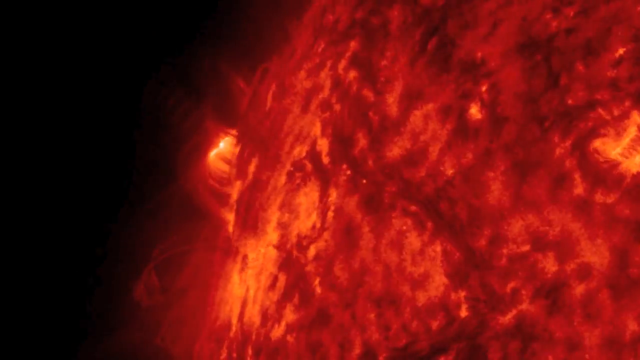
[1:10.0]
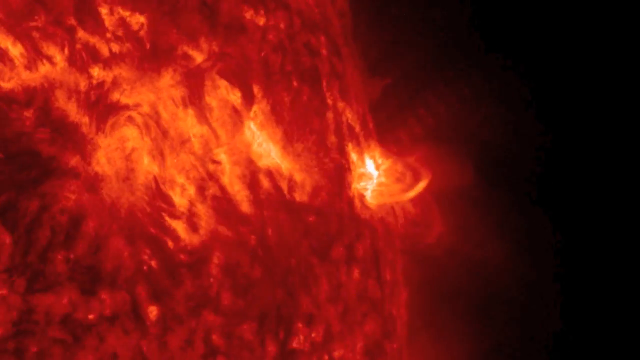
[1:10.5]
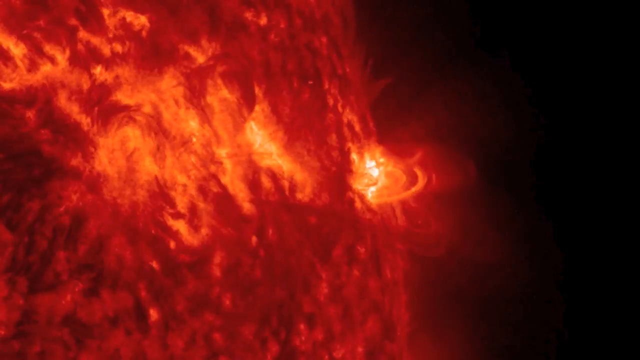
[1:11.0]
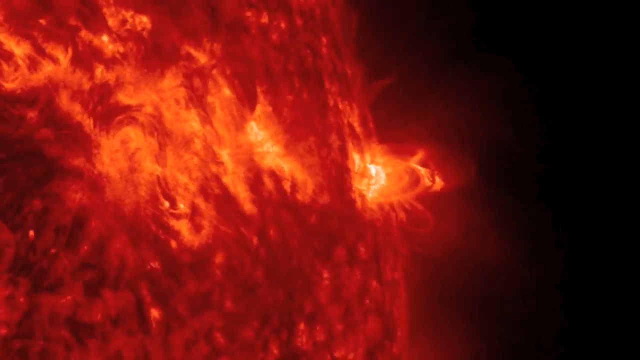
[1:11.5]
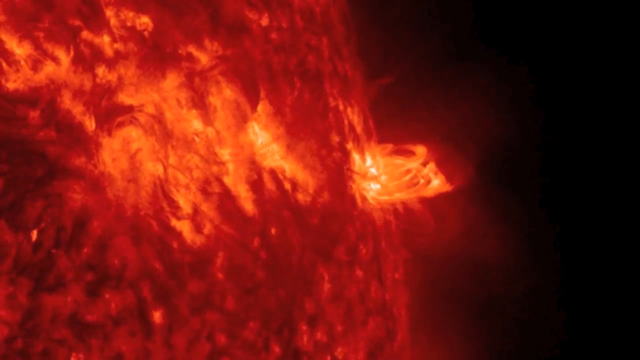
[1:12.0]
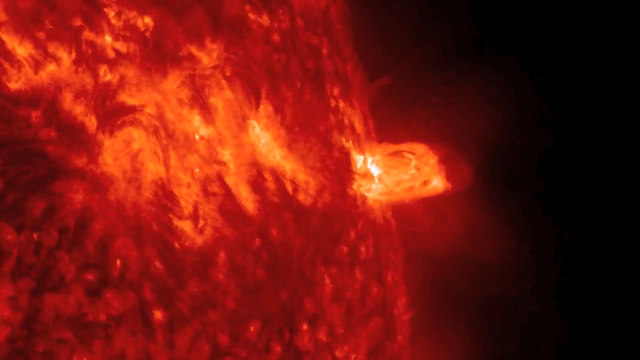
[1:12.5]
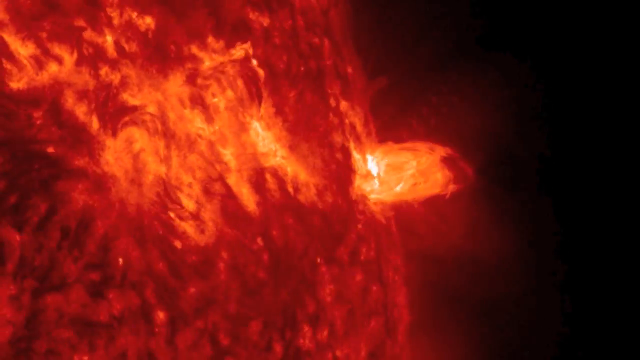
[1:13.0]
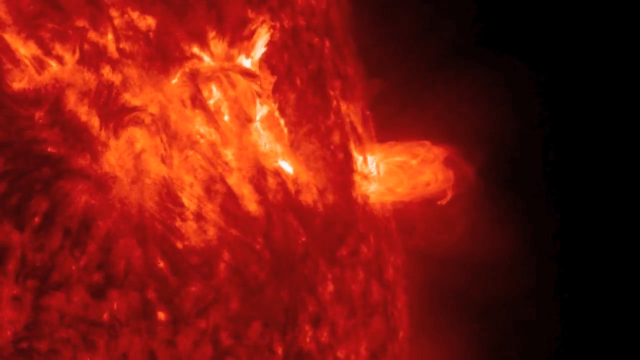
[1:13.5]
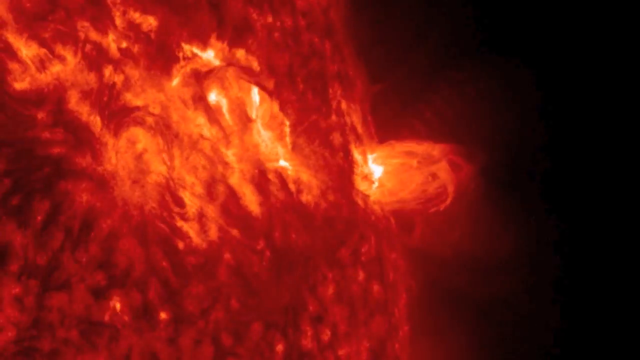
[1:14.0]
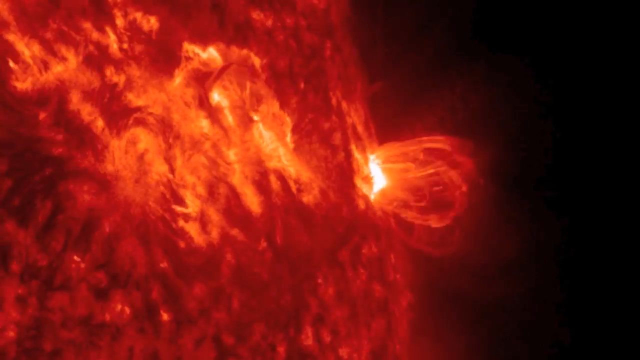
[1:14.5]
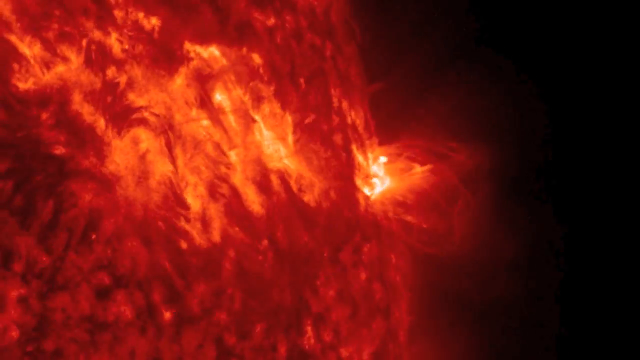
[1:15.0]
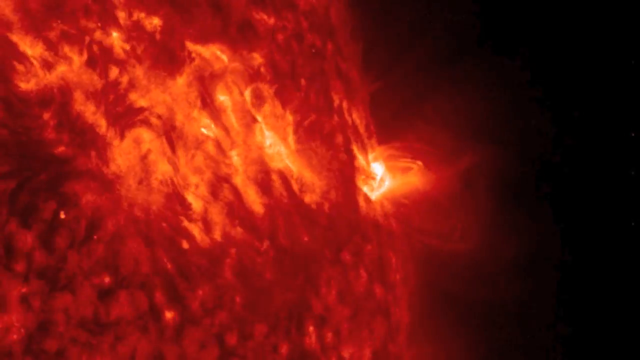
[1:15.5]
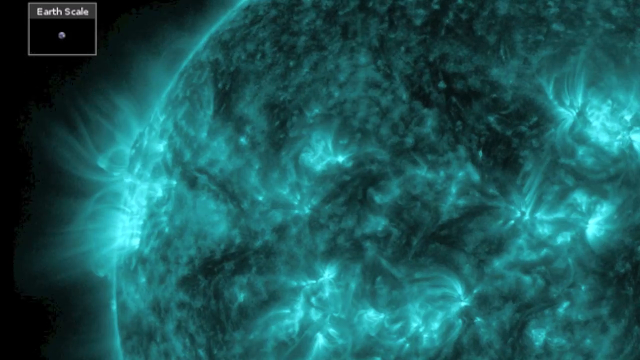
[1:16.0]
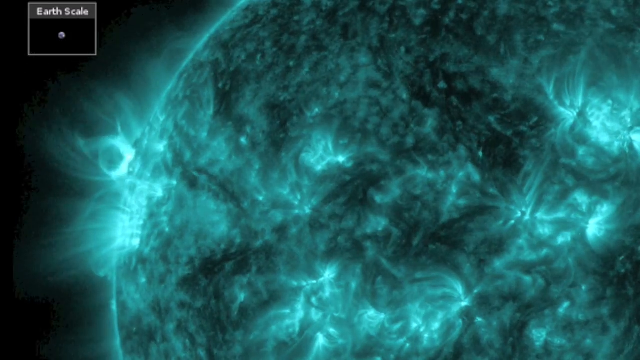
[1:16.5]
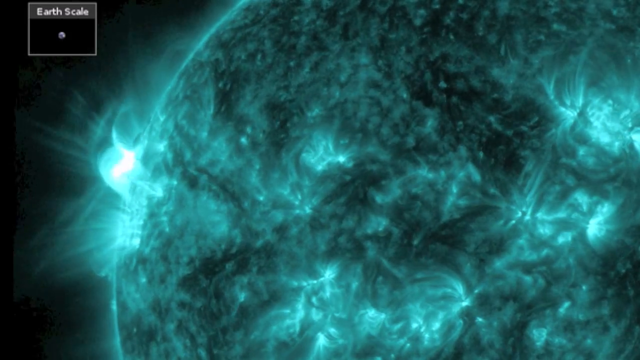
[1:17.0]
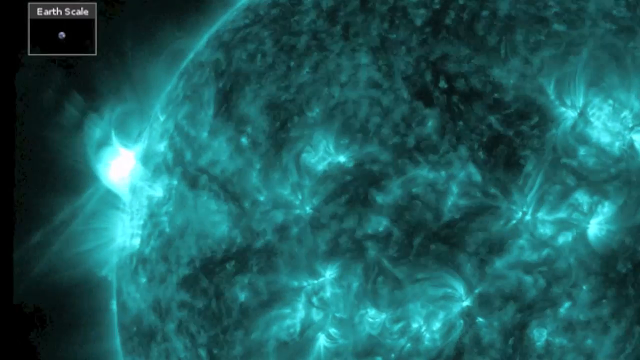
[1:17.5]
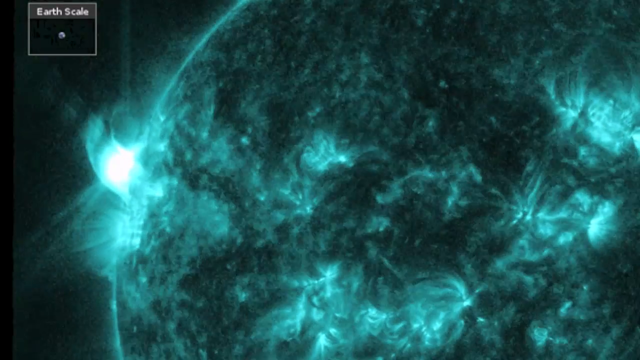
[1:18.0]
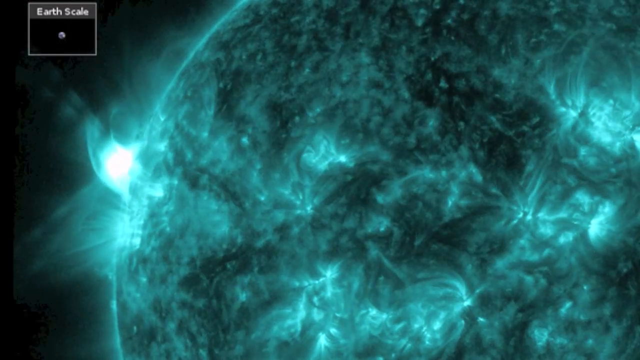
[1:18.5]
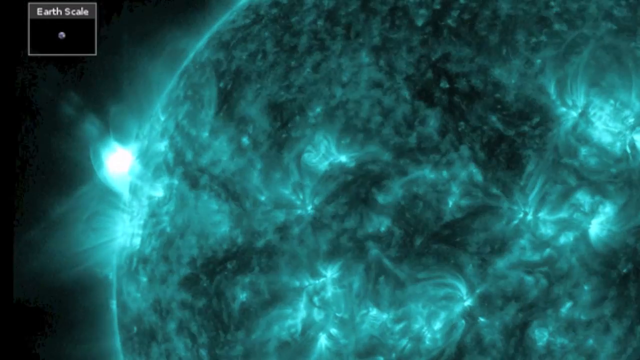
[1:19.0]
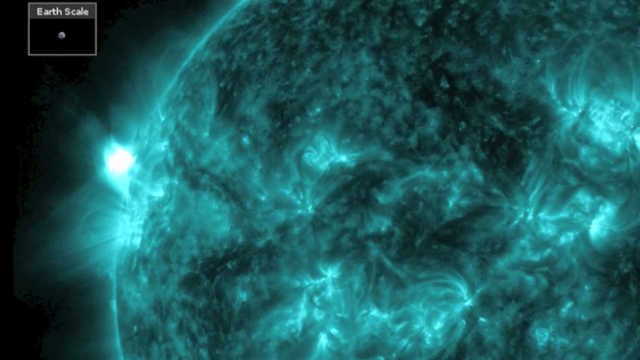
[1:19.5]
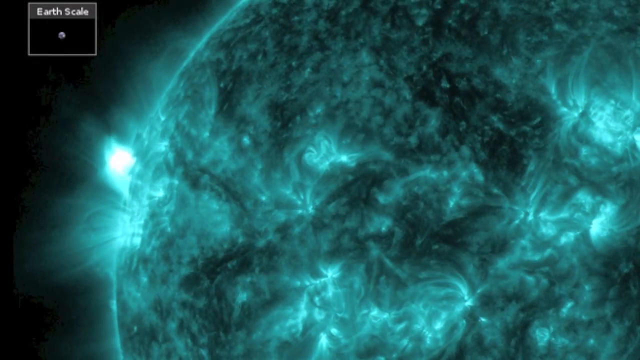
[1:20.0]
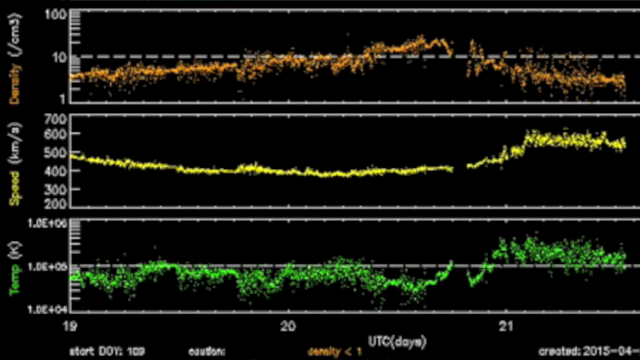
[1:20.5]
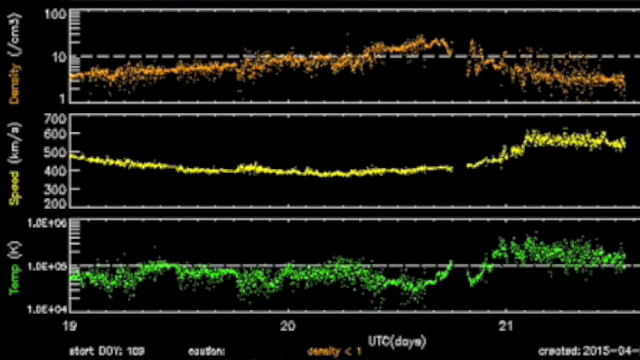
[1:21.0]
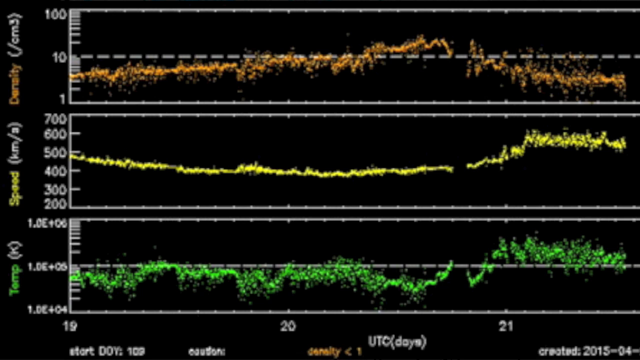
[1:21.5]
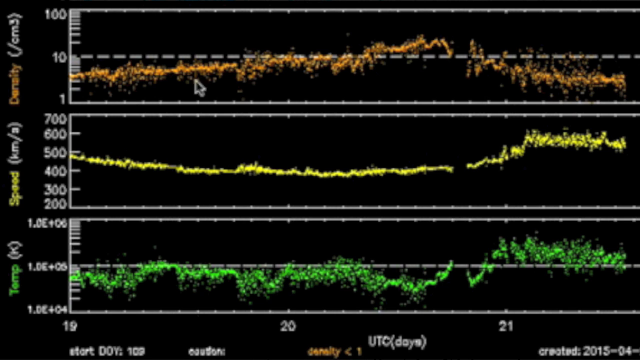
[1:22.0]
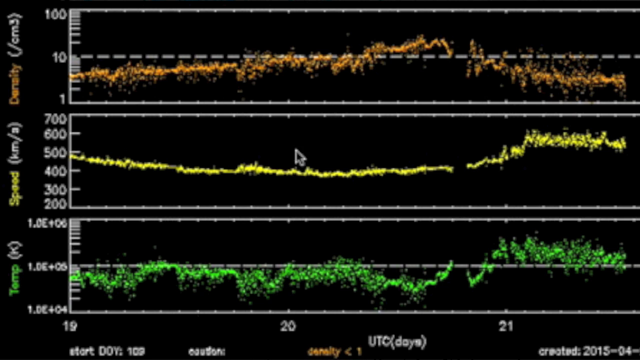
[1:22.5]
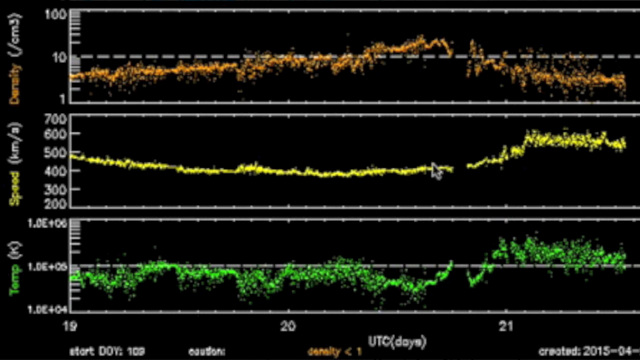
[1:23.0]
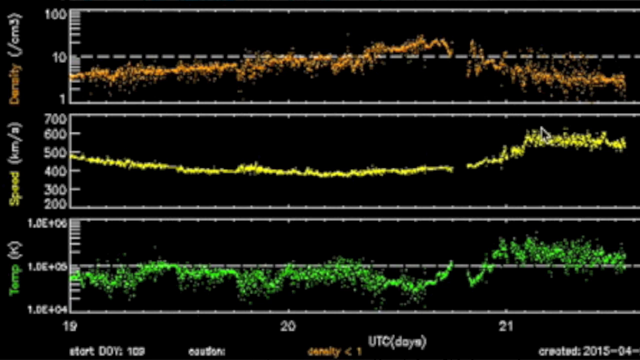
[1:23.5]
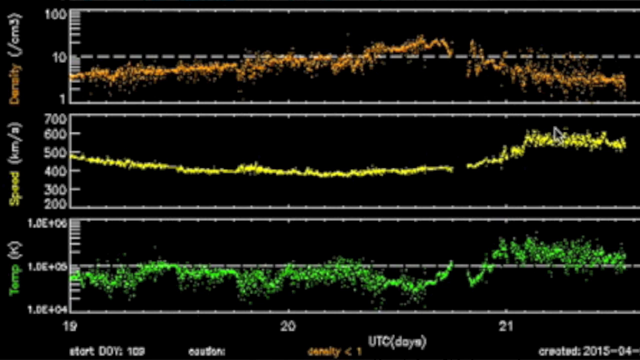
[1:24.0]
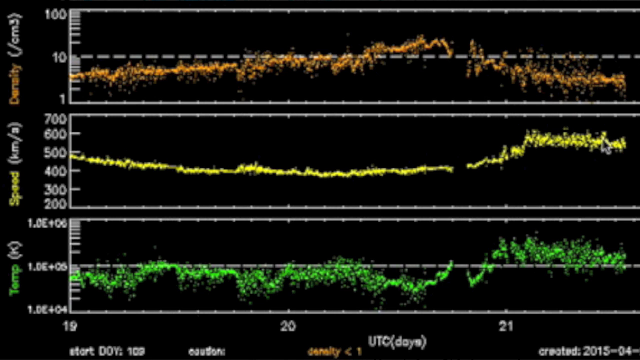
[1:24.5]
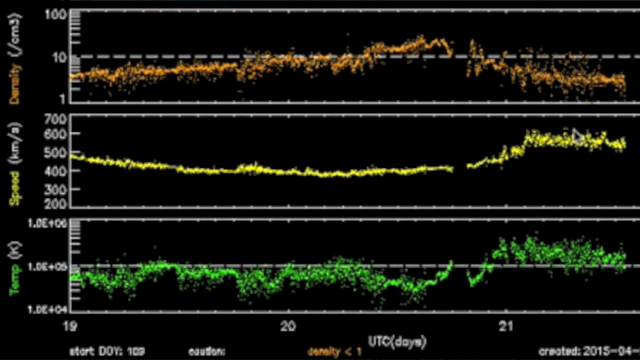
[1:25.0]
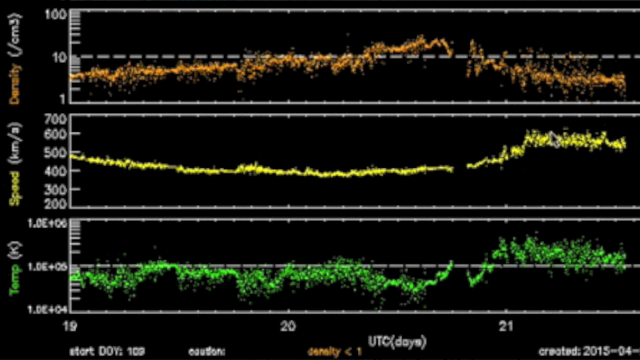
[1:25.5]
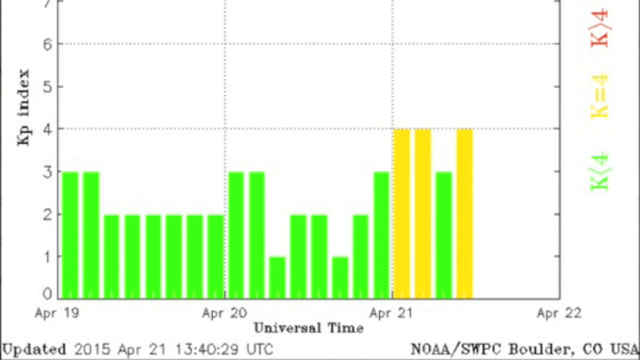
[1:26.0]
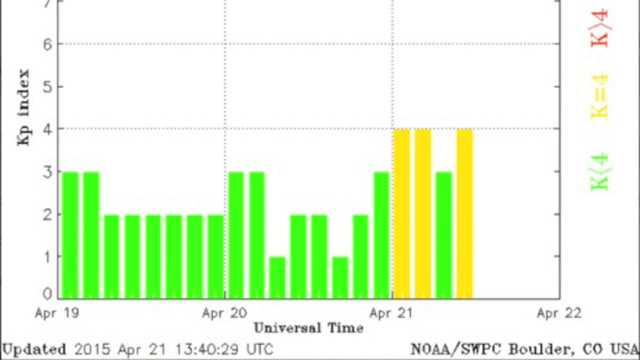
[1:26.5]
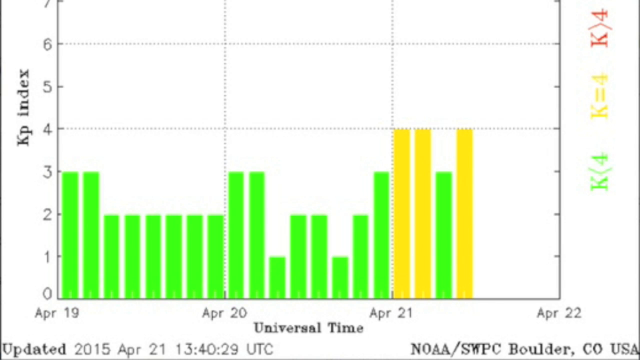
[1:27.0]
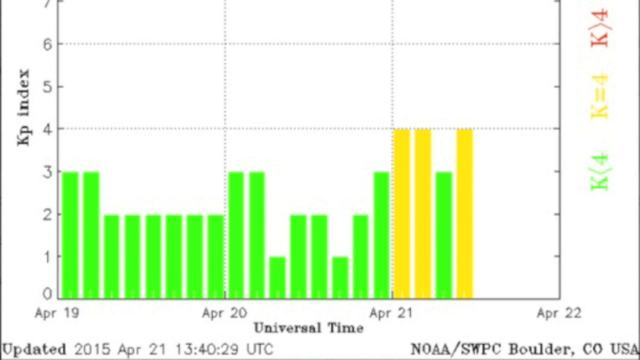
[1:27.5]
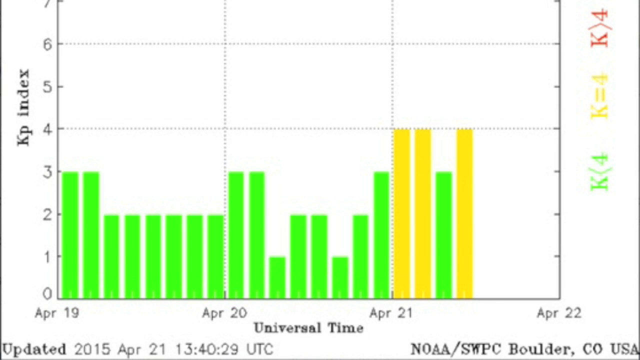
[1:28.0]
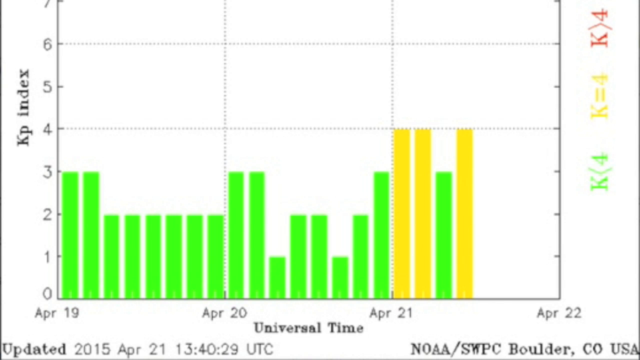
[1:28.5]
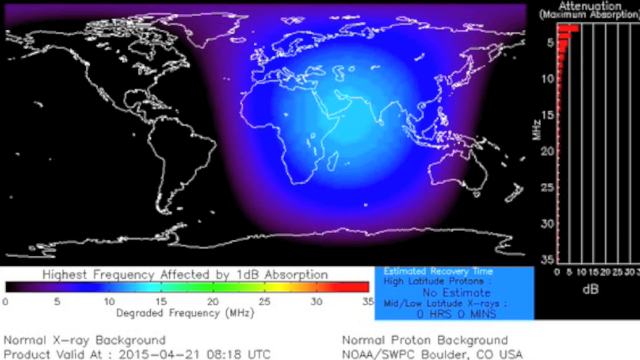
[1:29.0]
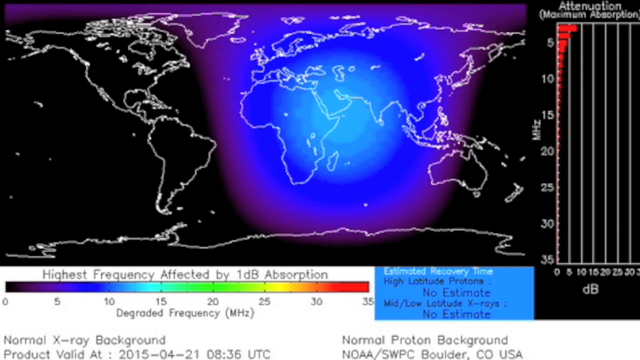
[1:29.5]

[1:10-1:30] What looks like a surface of red and black swirls, fiery like molten lava, fills the view, with blackness in the background at the top left and swirls of fire coming up from the surface. The view goes to the right side of the circle, showing orange and red in the middle and swirls of red that look like lava, with black at the top right. It then goes back to a teal and black area, with white text reading "earth scale" at the top right or top left and a black rectangle with a white square in the middle of it. Next come what look like three horizontal graphs of squiggly orange, green, yellow and green lines; a black mouse cursor moves down toward the bottom and the middle. A bar graph of green and yellow lines on a white background follows. Then a map of the world appears, white lines on a black background, with a blue highlight over Europe, Russia and Africa. At the bottom it reads "highest frequency affected by one dB absorption".